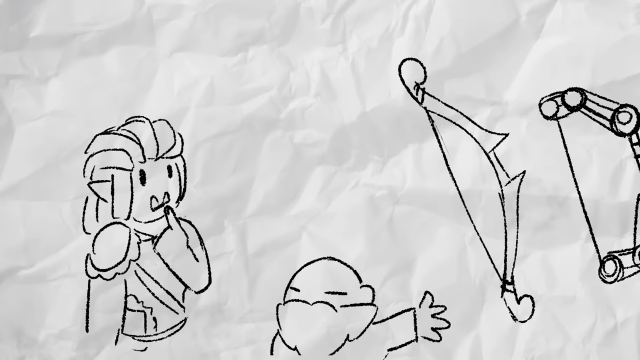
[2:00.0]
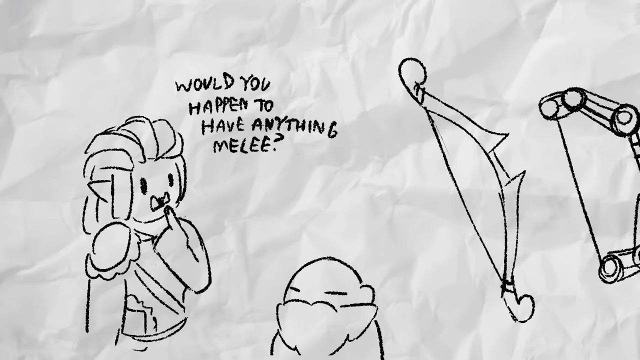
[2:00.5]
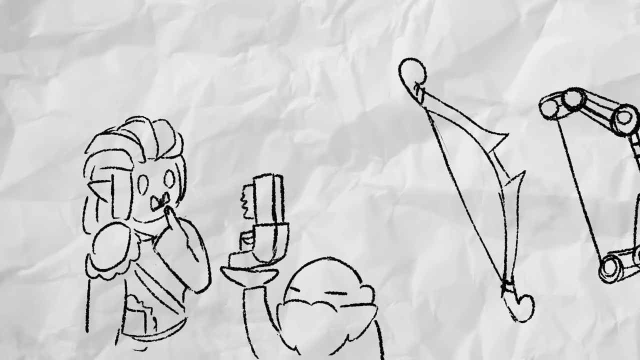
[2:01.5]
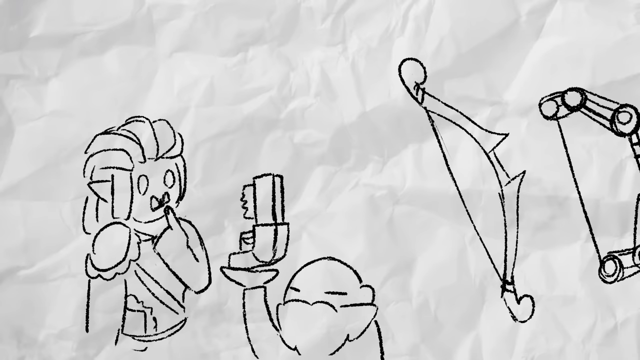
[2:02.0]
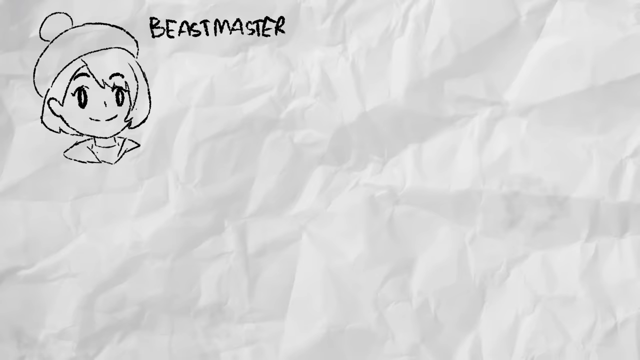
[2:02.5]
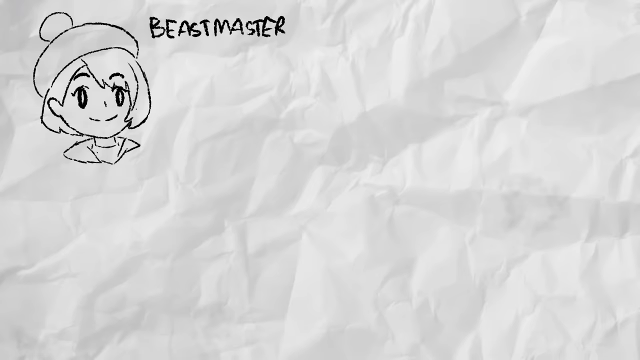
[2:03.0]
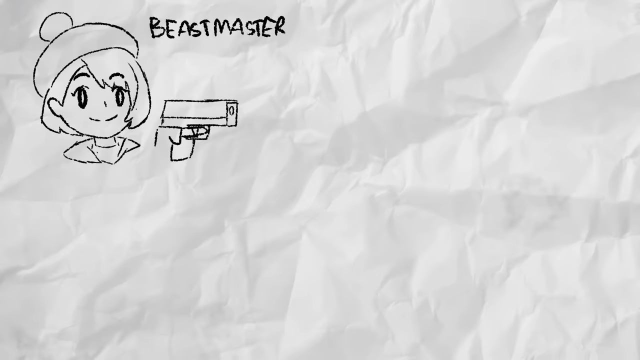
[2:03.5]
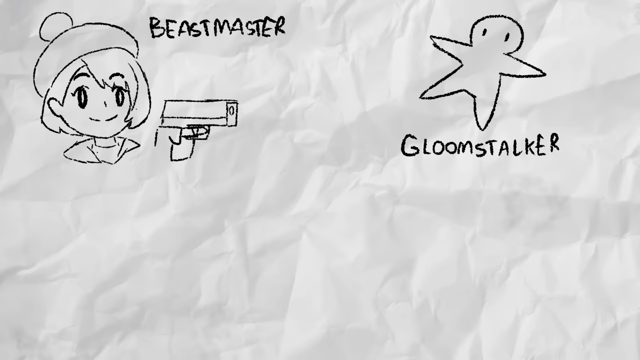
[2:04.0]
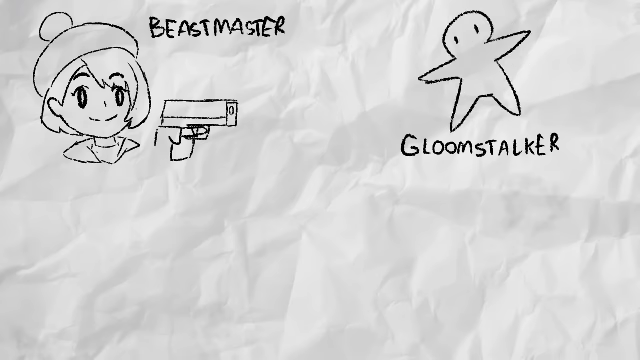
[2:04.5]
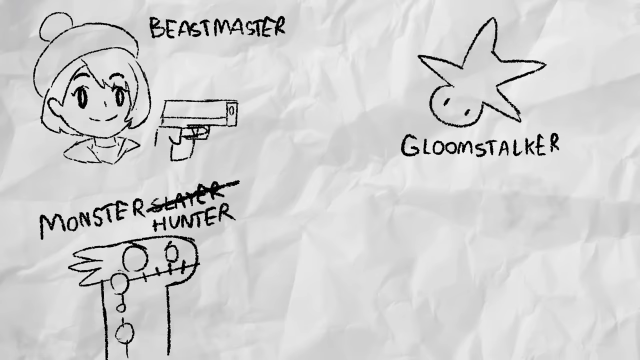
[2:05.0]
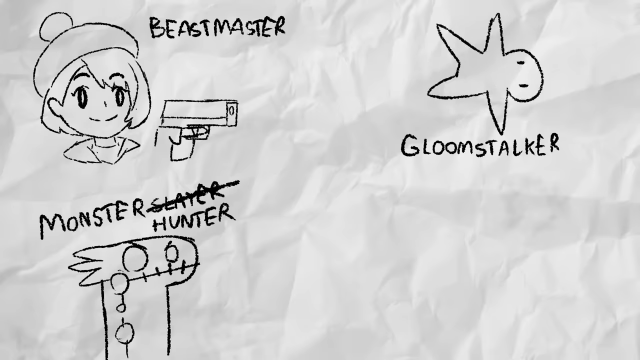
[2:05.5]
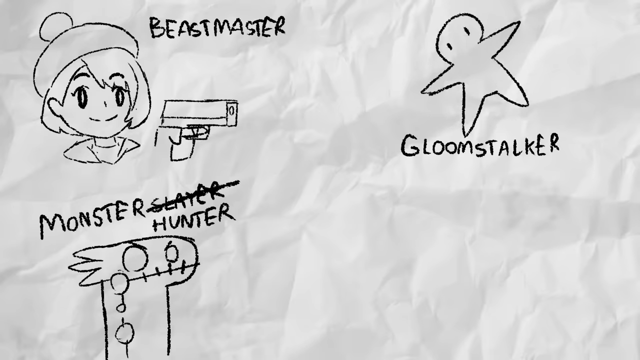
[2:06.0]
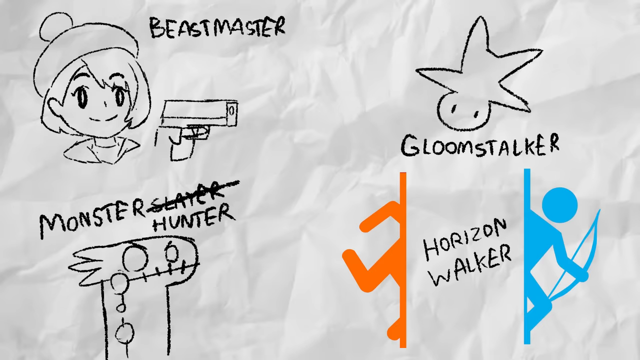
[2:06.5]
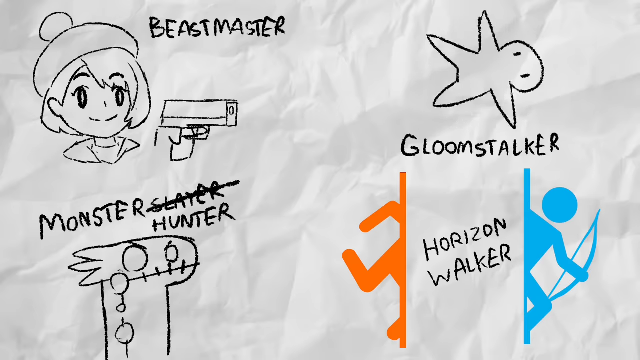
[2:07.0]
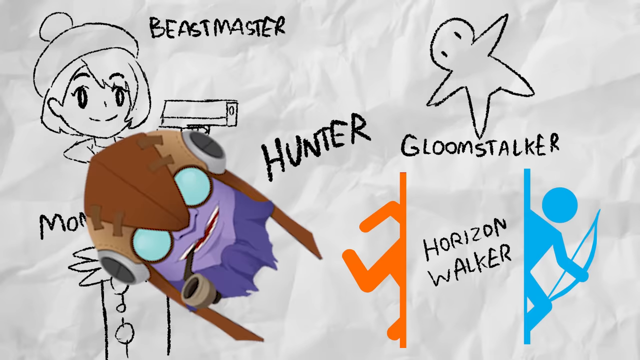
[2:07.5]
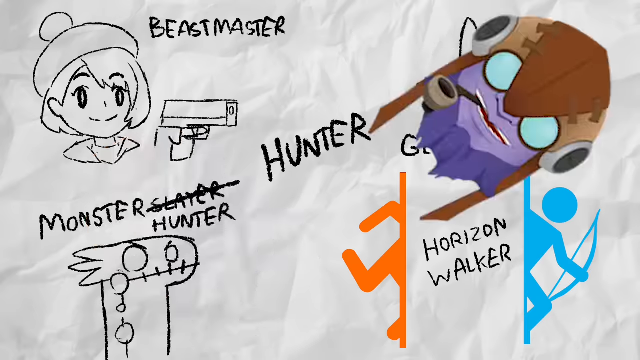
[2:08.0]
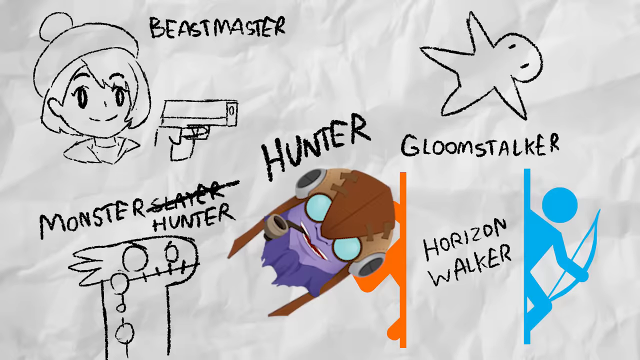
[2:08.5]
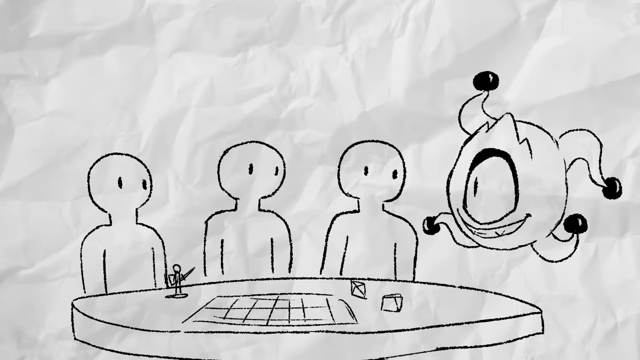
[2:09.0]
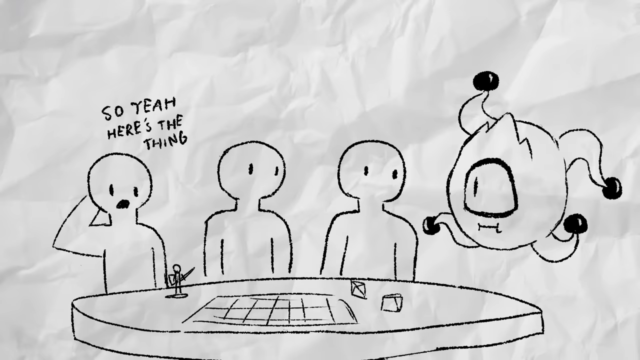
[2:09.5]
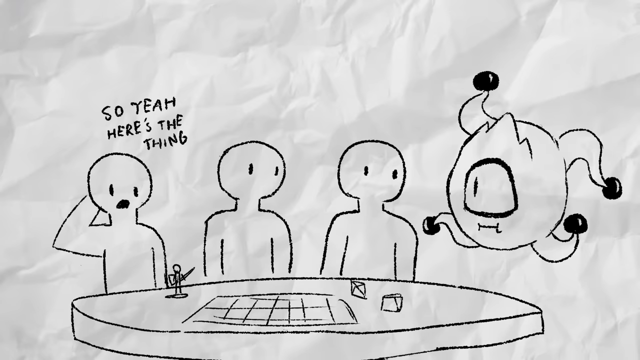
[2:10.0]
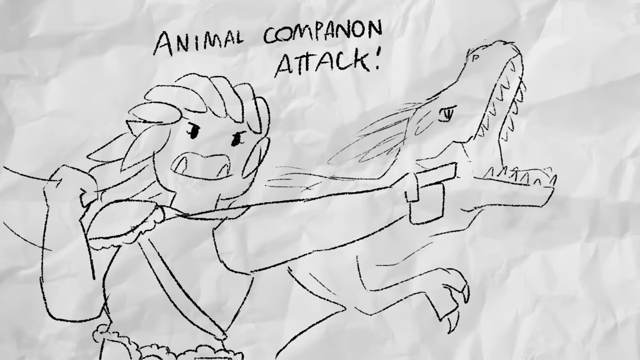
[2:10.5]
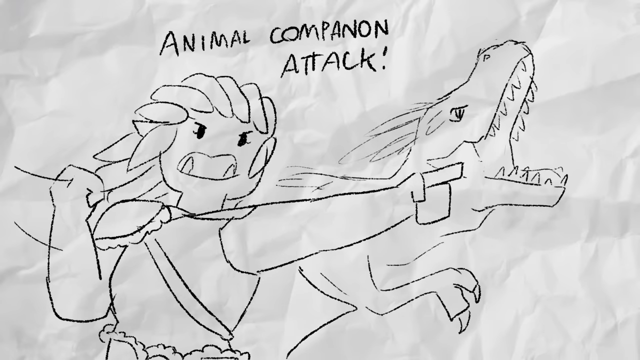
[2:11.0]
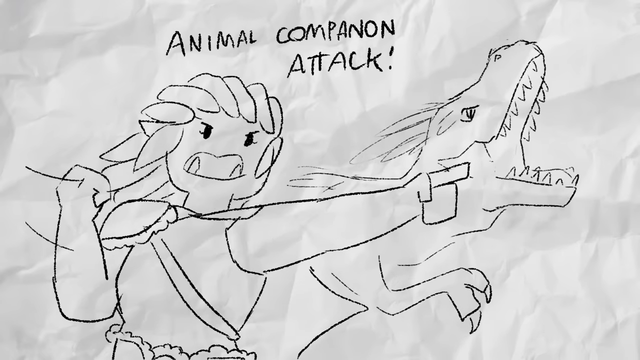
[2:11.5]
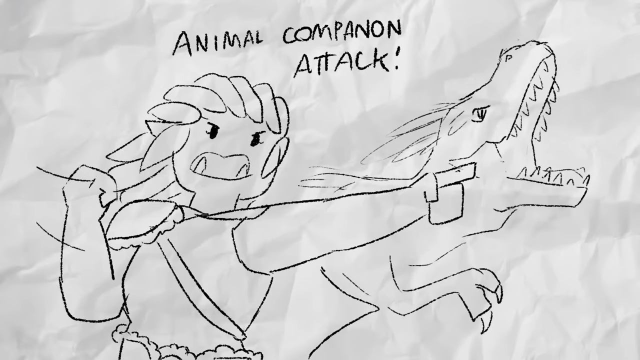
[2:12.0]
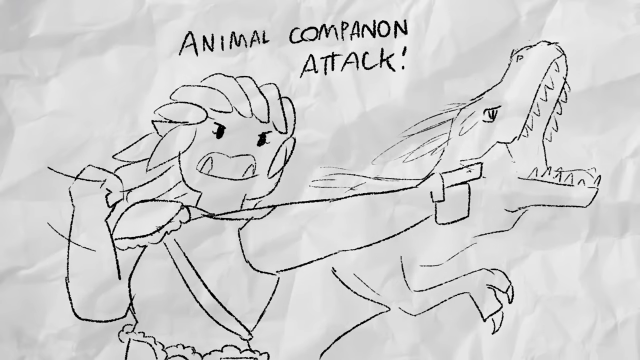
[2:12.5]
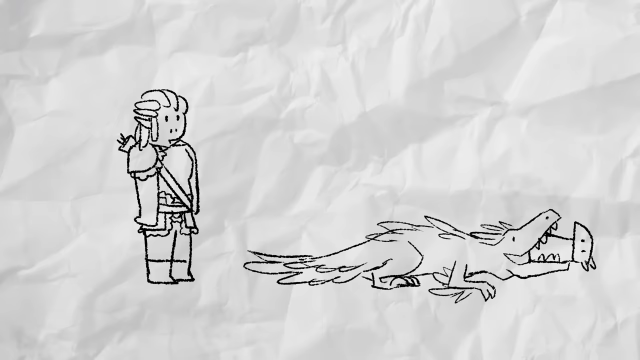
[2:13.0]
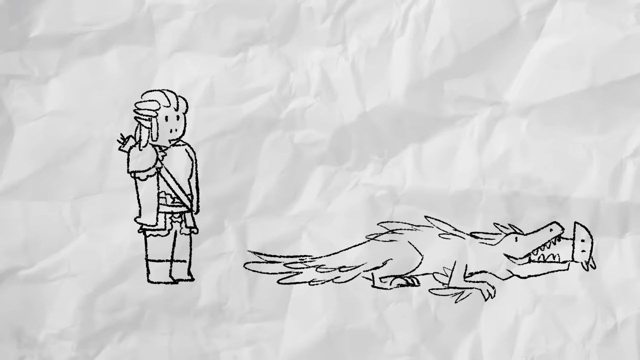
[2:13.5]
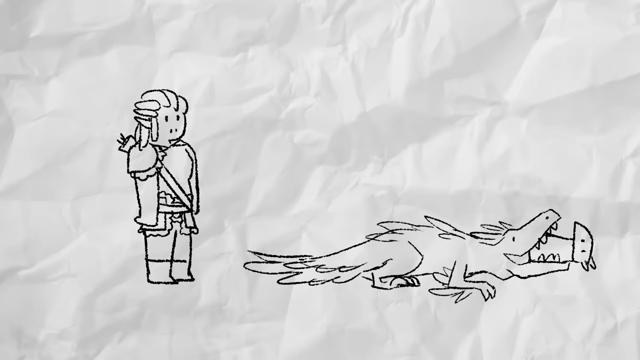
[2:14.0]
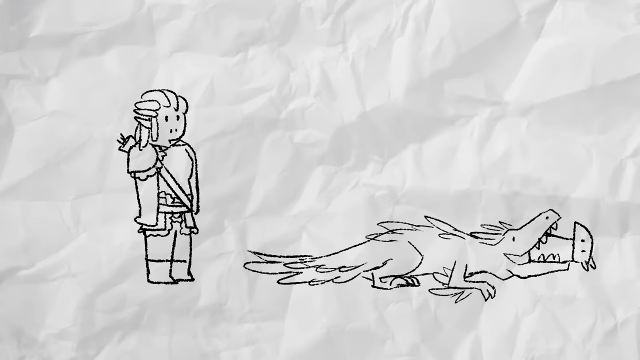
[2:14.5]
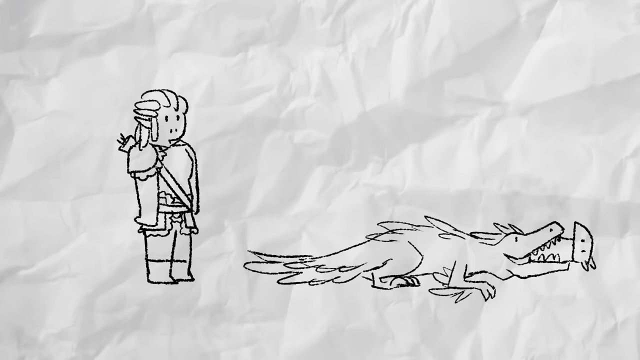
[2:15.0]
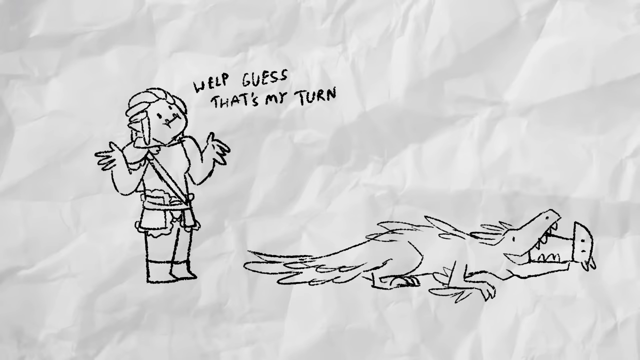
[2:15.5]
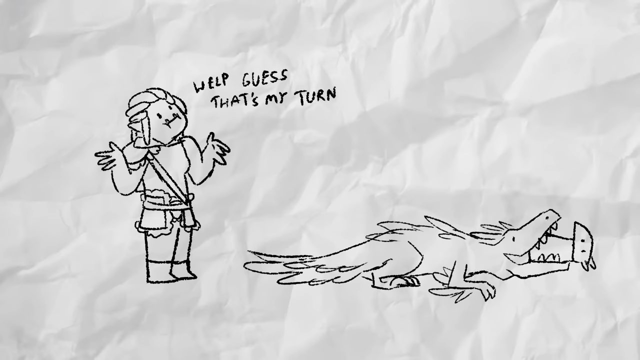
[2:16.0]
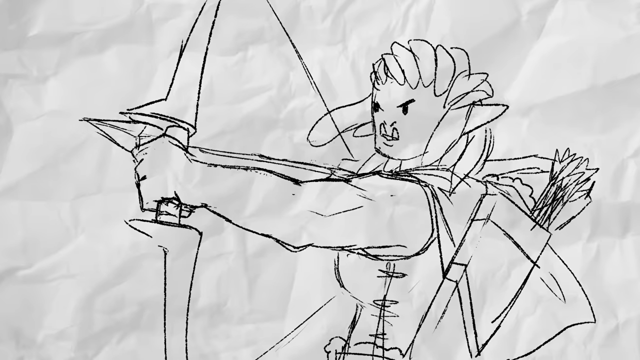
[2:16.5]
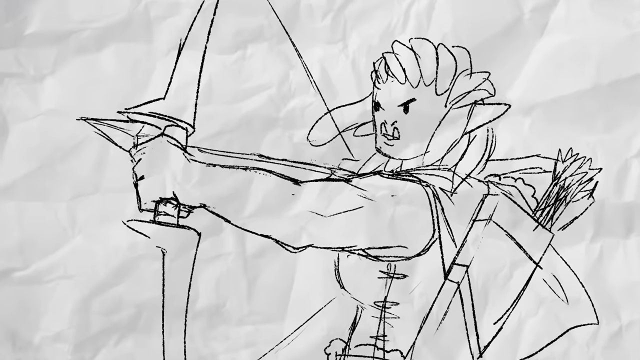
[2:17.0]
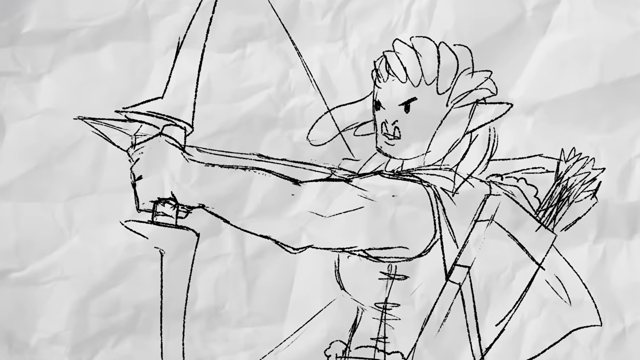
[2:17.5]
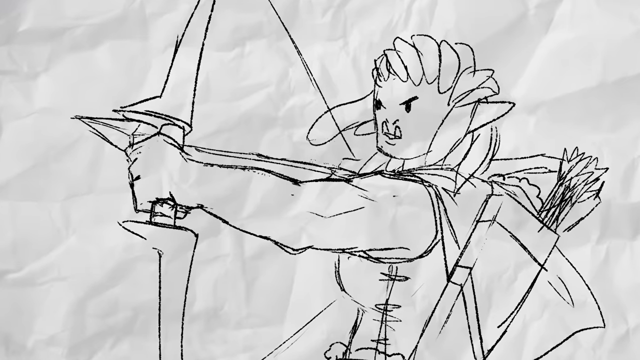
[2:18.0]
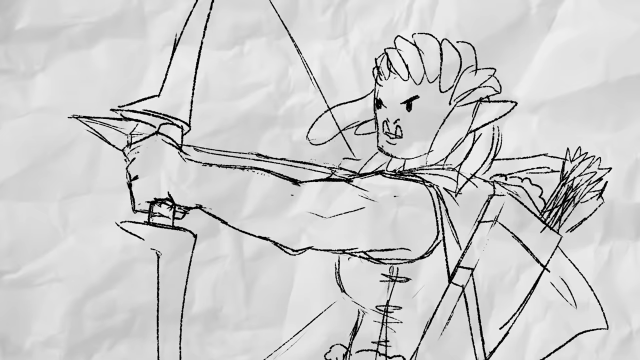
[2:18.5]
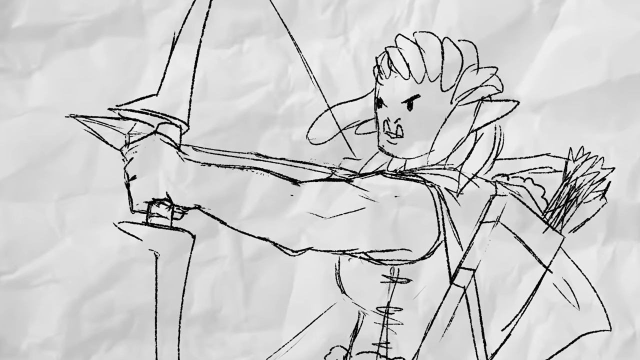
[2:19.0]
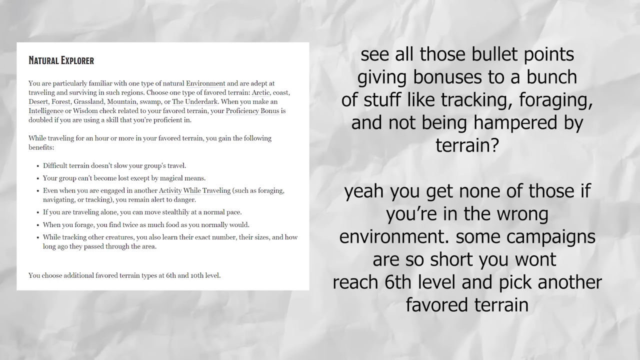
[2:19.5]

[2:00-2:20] Someone is presented a bow and arrow by a short individual. In black and white, a smiling woman wearing a hat appears with "Beastmaster" to the right, and she is shown holding a gun. To the right is "Gloomstalker," a person spinning in circles; "Monster Hunter" shows the lizard person's face; "Horizon Walker" shows somebody going through a portal, orange and blue, holding a bow and arrow; and "Hunter" is at the center, a person smoking a pipe. It then cuts to three people standing and sitting at a table, with a board in front of them, dice, and minifigures, and to the right somebody floating off the ground with an eyeball.